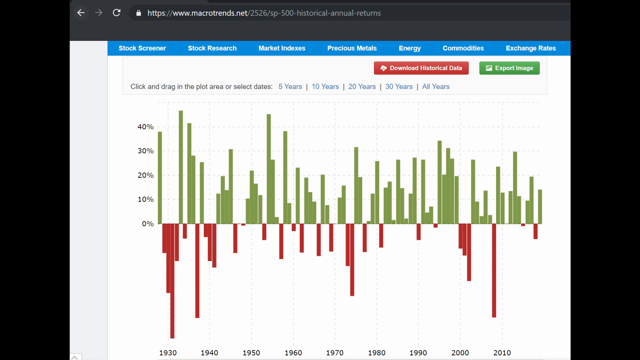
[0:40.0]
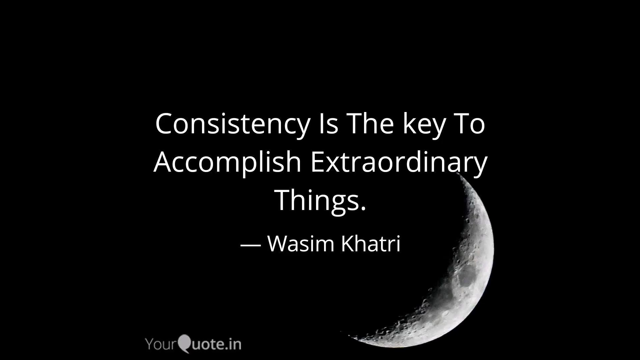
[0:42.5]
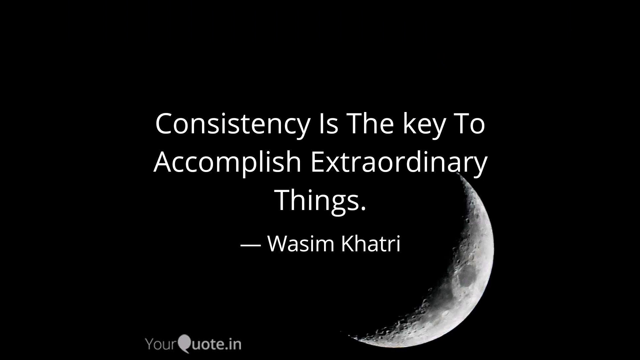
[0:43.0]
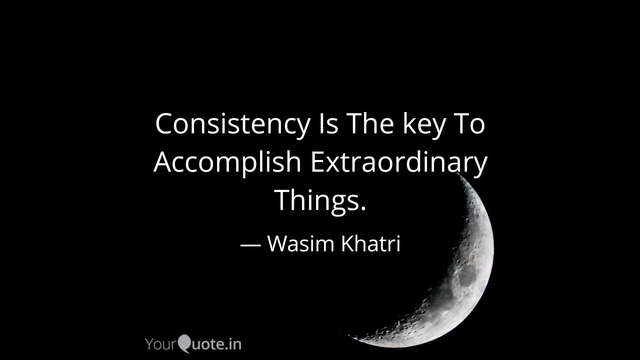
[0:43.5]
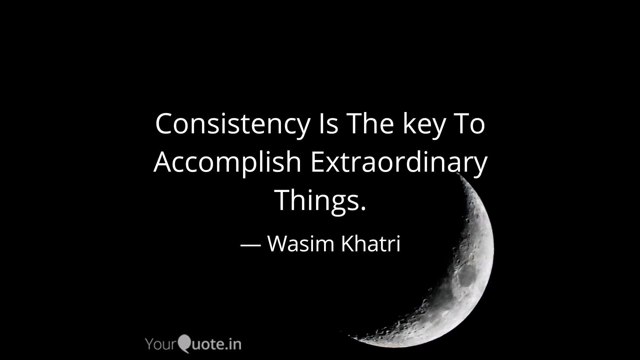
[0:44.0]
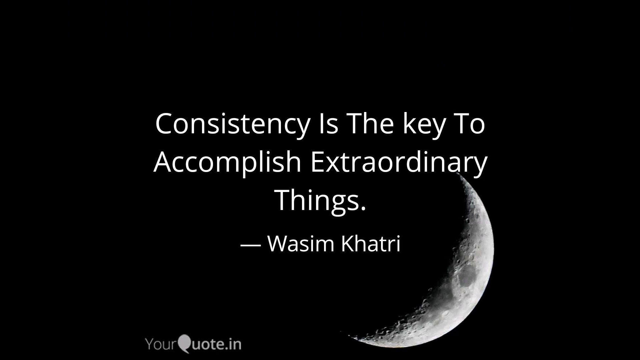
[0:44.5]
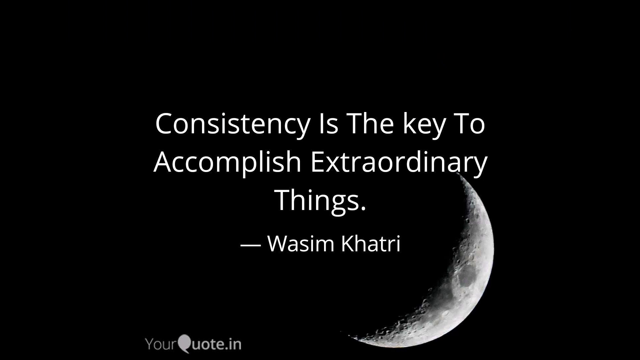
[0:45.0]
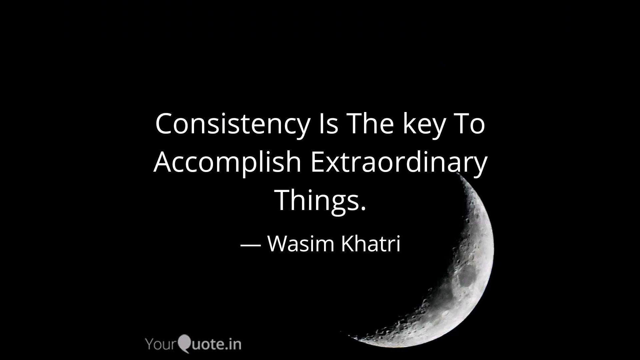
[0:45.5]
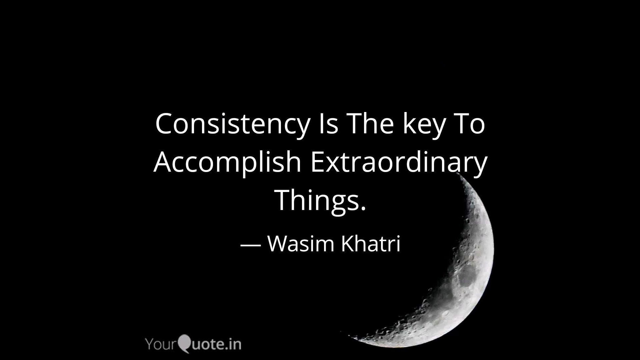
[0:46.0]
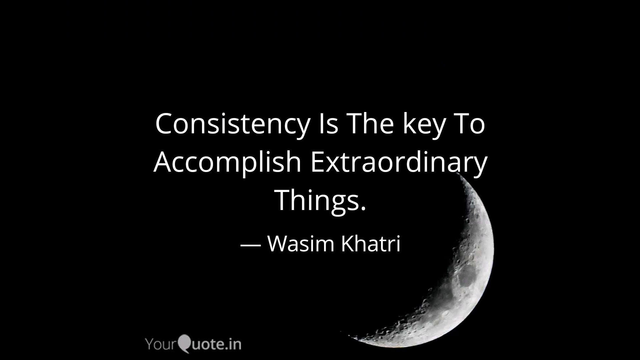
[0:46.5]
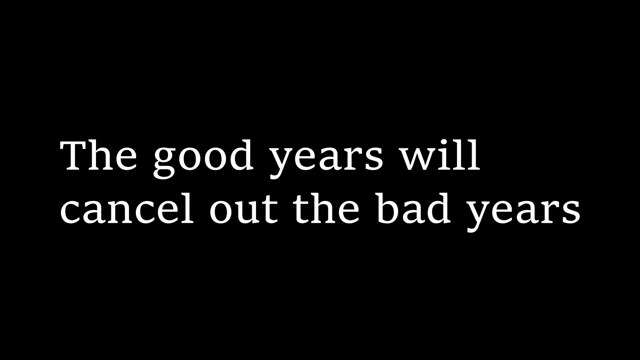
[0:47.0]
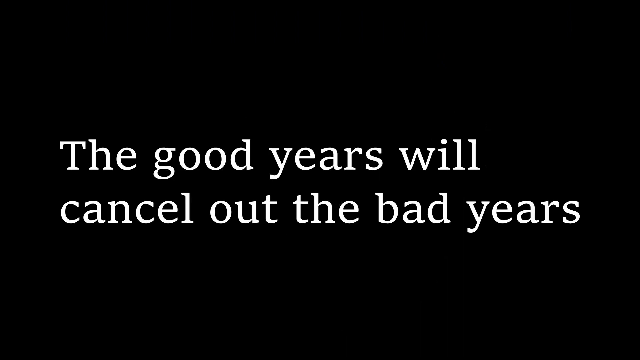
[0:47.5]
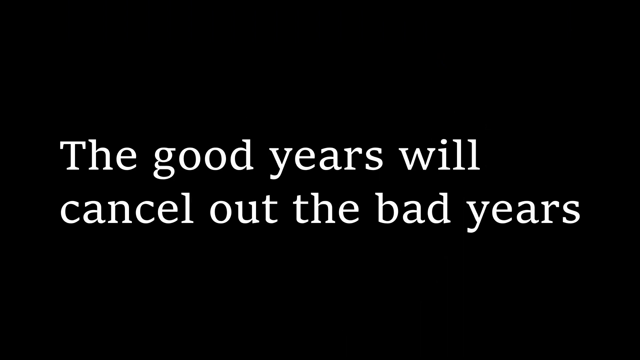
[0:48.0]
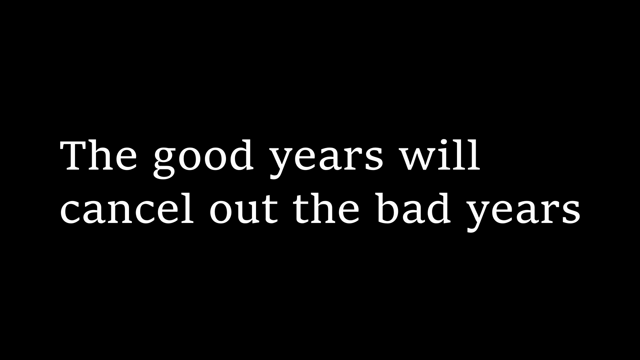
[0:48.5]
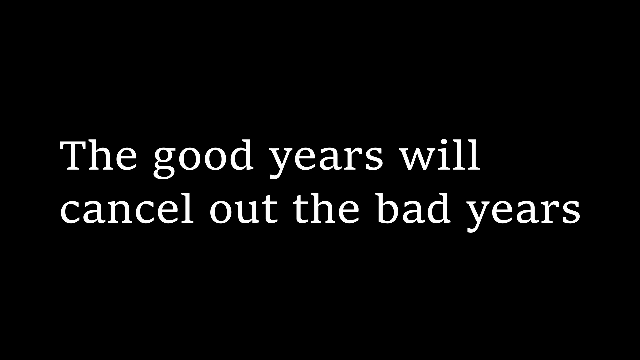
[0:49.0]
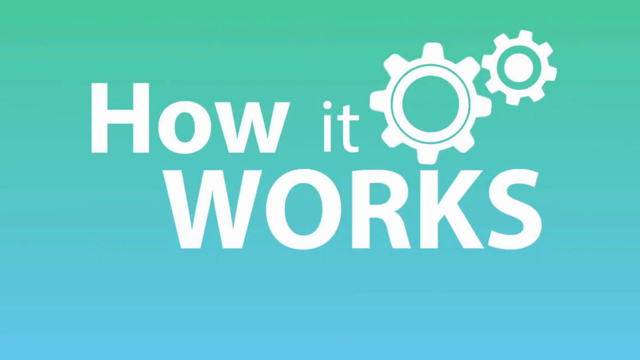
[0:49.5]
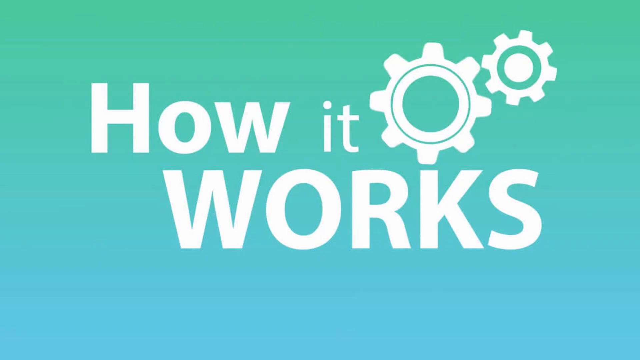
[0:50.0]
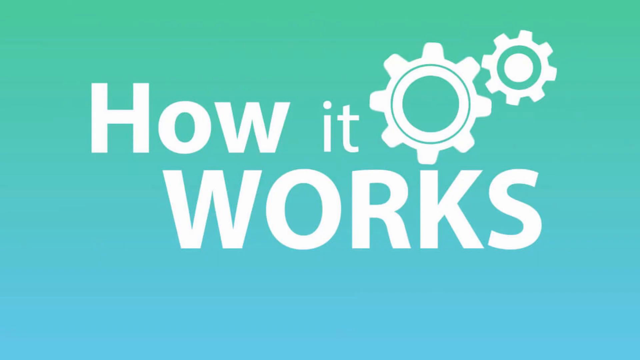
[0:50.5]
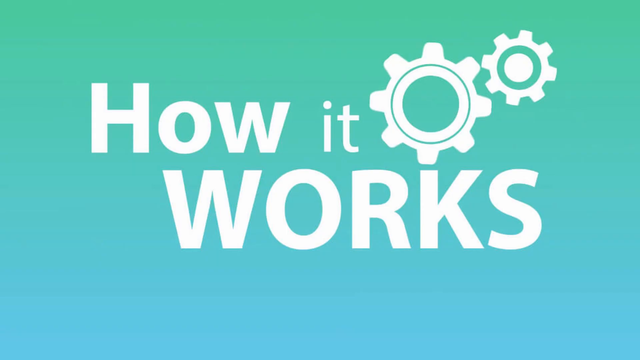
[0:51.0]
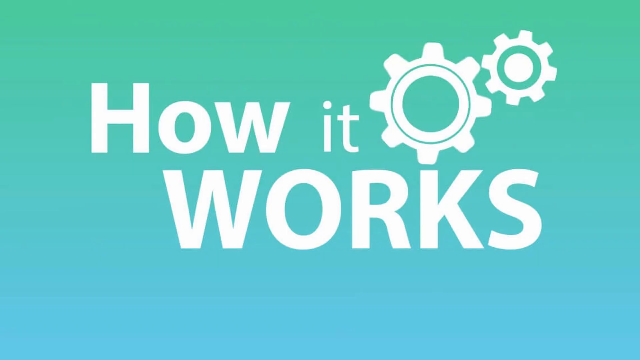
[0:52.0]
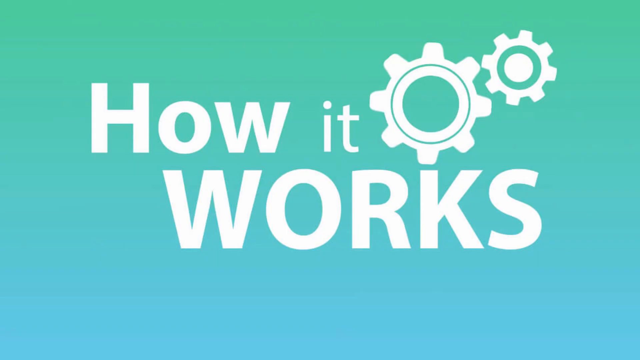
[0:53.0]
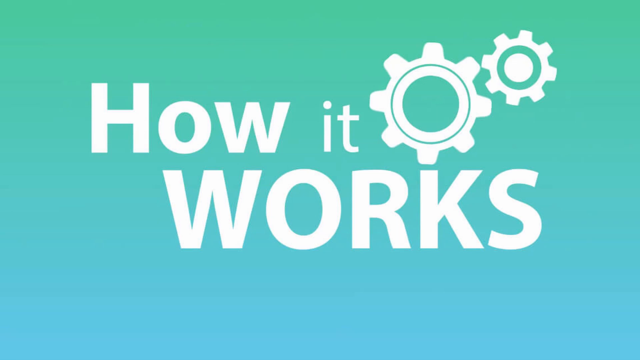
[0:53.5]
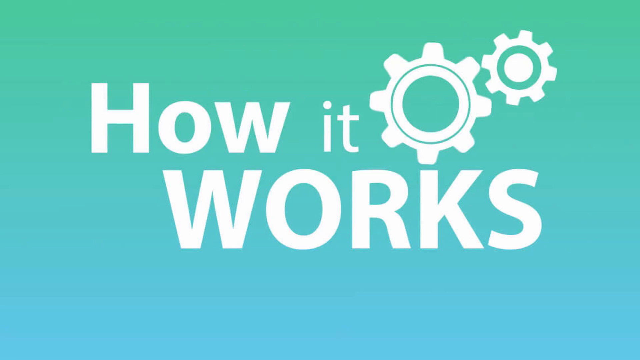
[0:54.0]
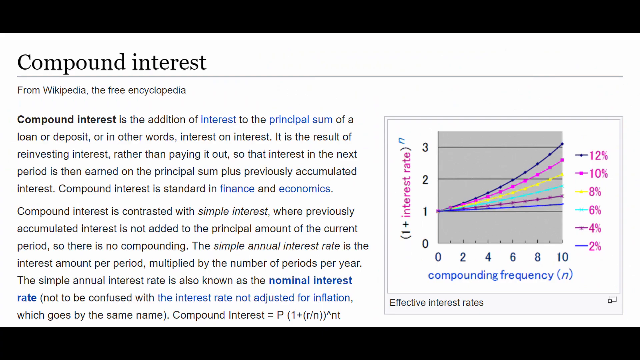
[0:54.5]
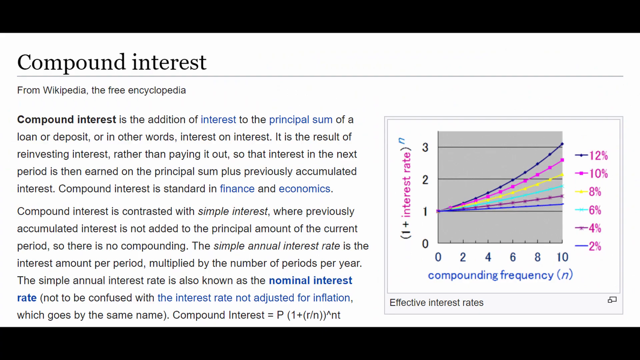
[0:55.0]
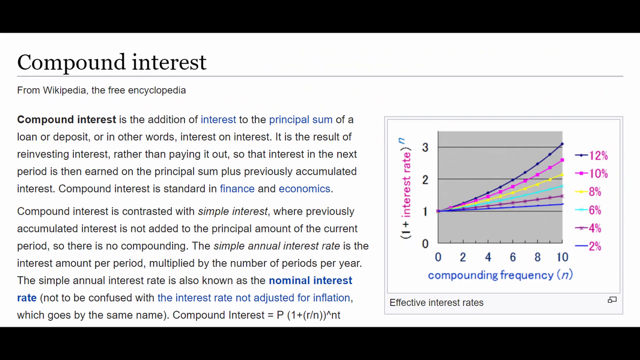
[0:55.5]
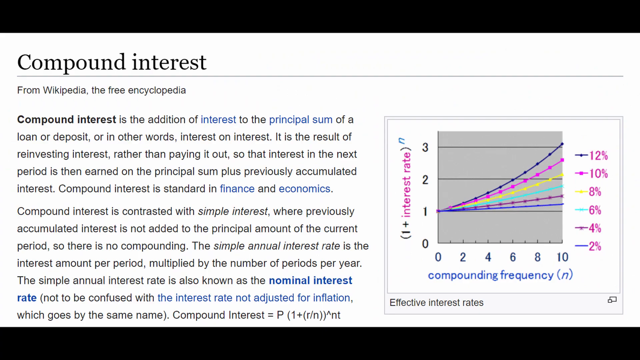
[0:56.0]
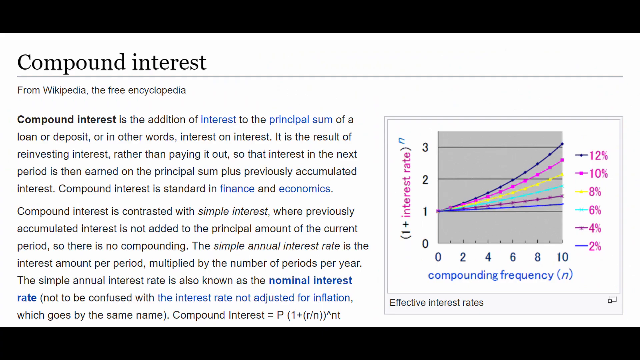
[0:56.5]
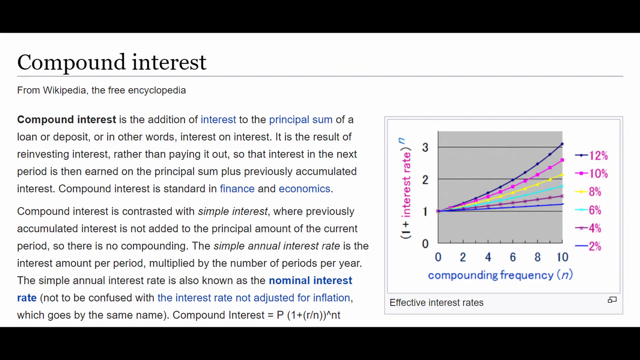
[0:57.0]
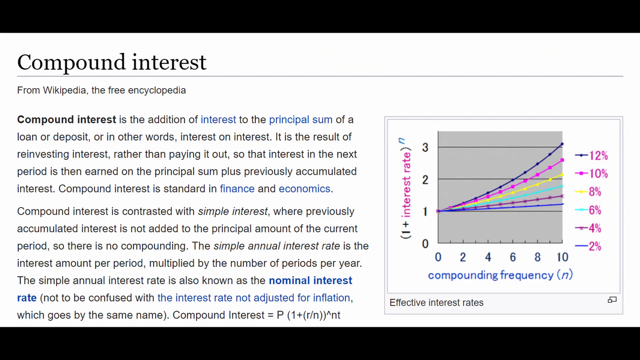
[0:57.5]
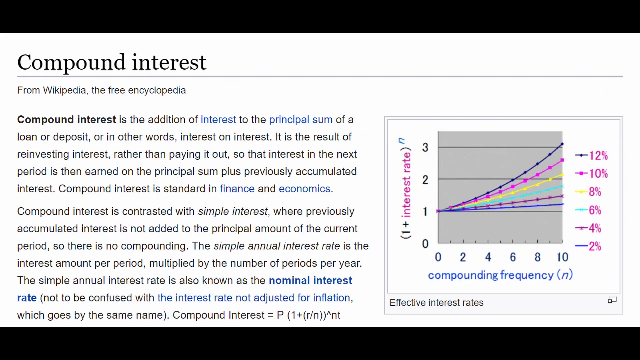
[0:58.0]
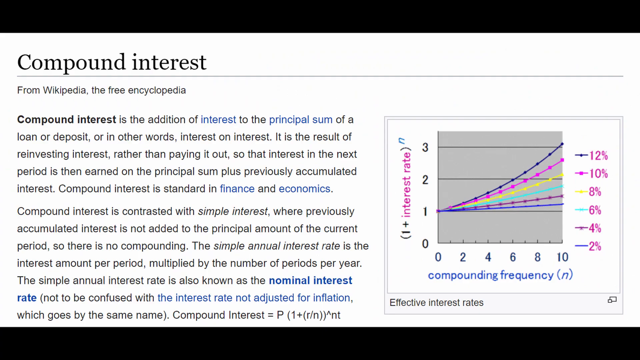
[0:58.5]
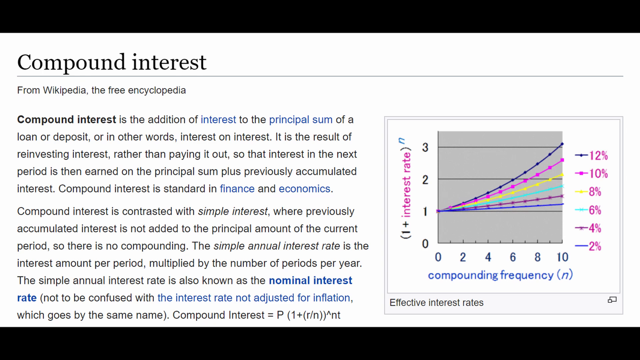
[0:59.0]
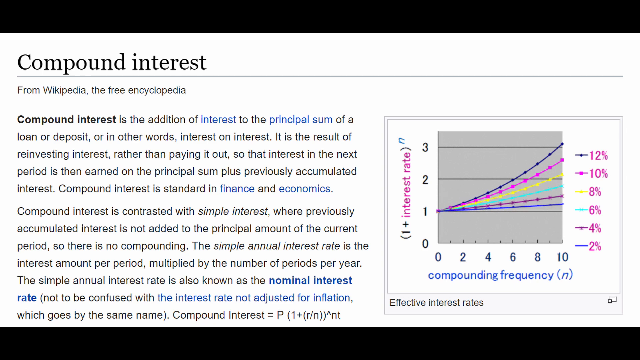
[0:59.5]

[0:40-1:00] An image of a moon suddenly appears in the background, with text in front reading "Consistency is the key to accomplish extraordinary things. Wasim Khatri." It seems to be a saying. Another text then appears: "The good years will cancel out the bad years." This is followed by more animated text on a blue background, with an image of two spinning nuts and the words "How it works." A Wikipedia page about compound interest comes next. It reads: "The compound interest is the addition of interest to the principal sum of a loan or deposit. Or in other words, interest on interest. It is the result of reinvesting interest, rather than paying it out." The page goes on to contrast compound interest with simple interest and to define the simple annual interest rate, also known as the nominal interest rate. It then shows a formula and an image that visualizes the concept.